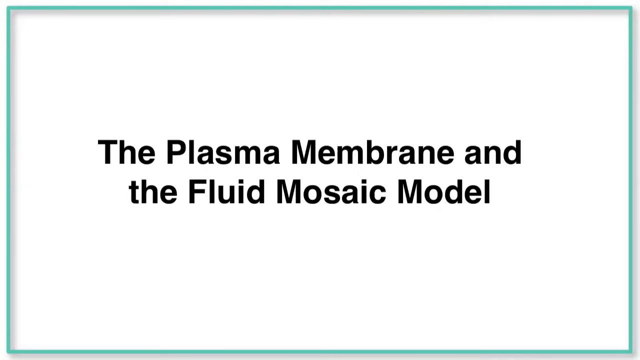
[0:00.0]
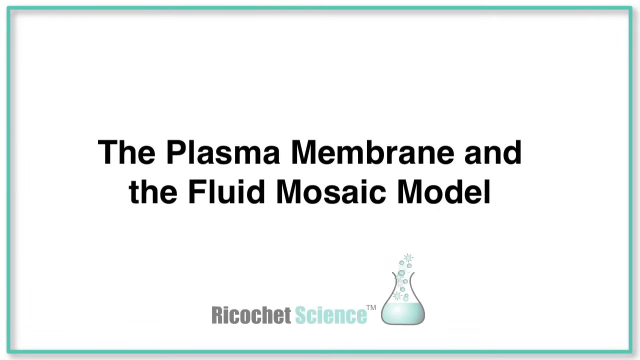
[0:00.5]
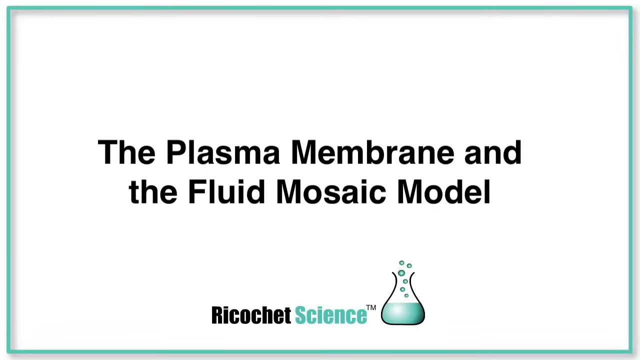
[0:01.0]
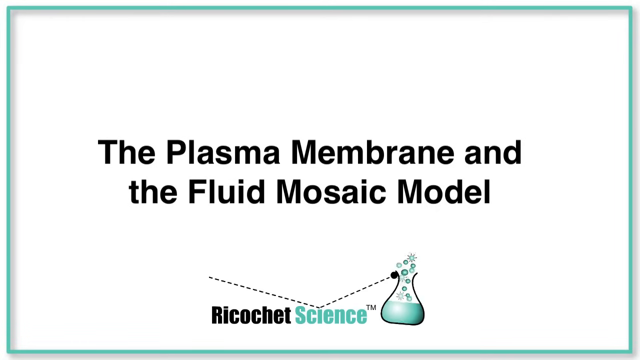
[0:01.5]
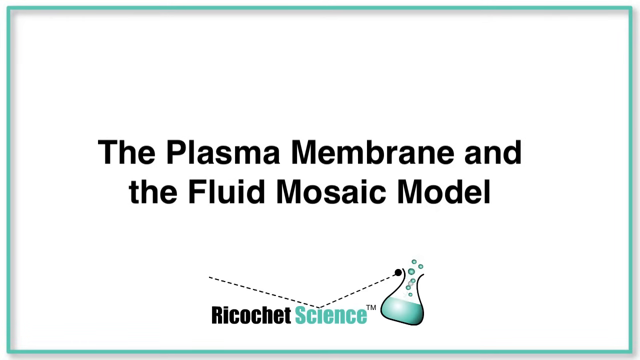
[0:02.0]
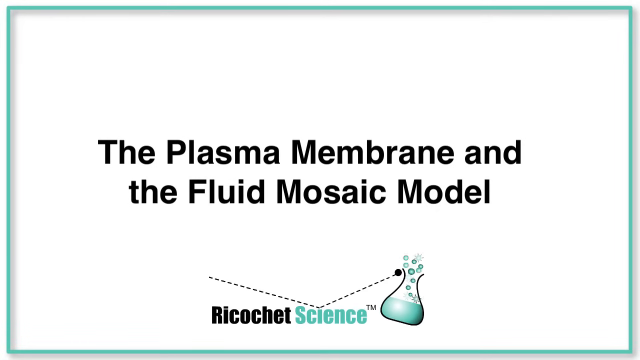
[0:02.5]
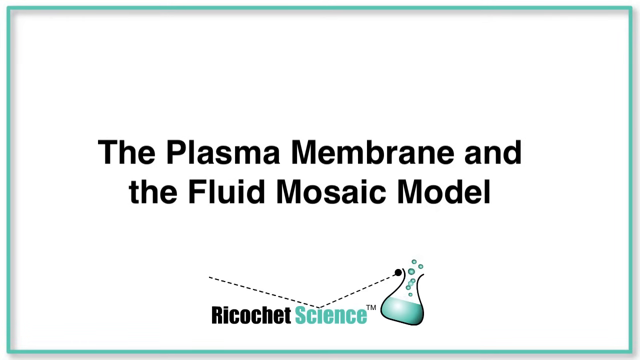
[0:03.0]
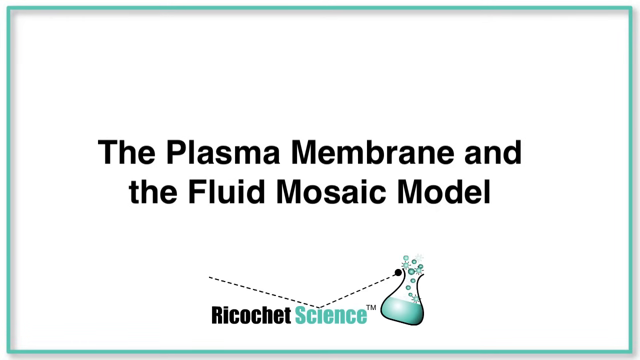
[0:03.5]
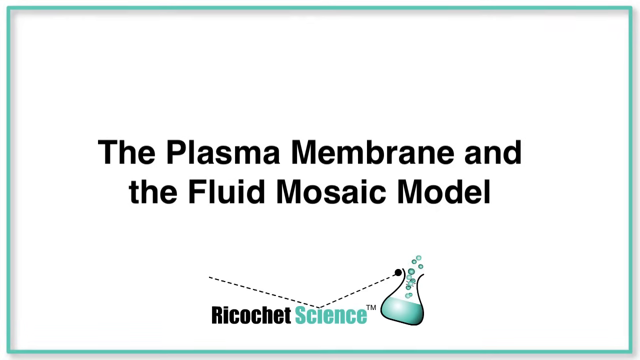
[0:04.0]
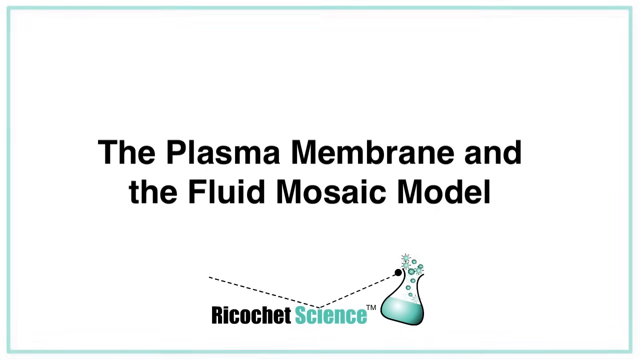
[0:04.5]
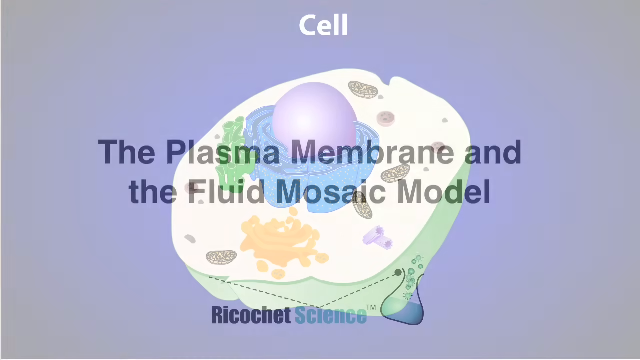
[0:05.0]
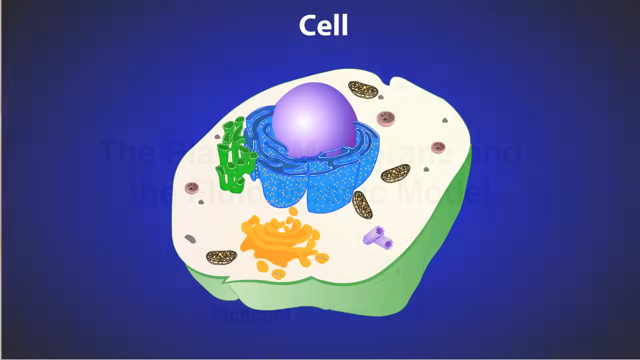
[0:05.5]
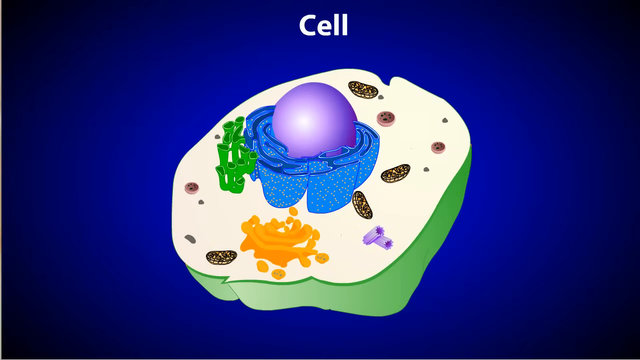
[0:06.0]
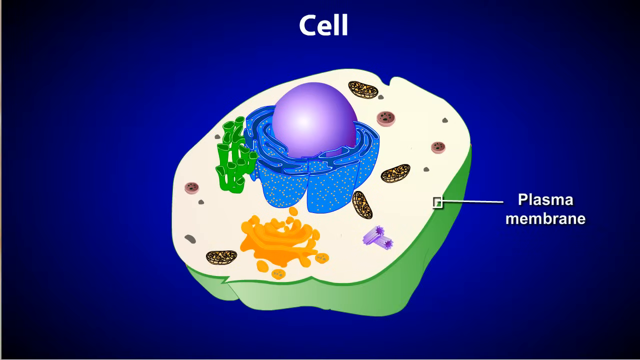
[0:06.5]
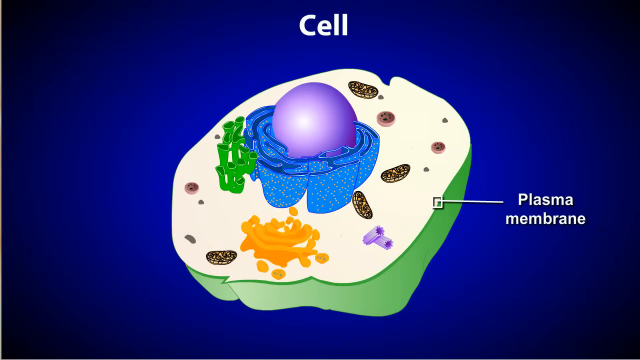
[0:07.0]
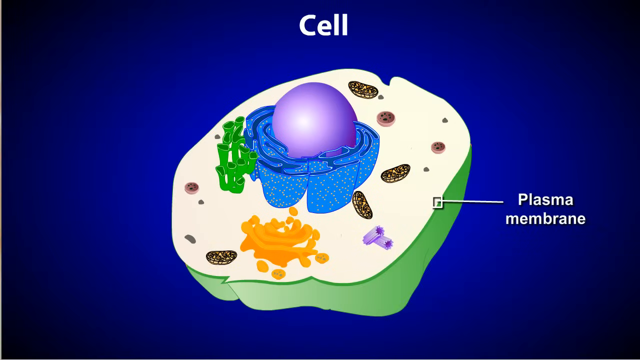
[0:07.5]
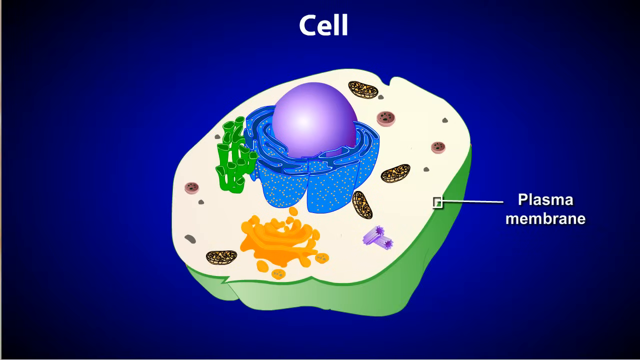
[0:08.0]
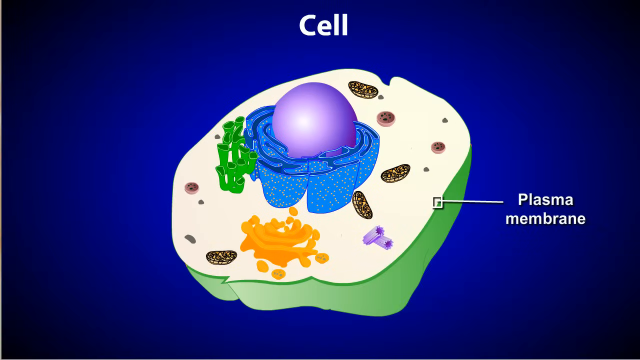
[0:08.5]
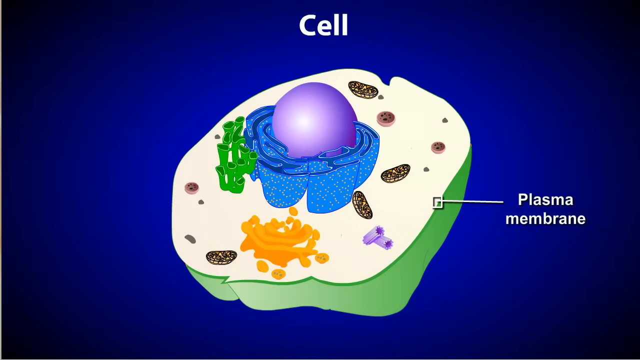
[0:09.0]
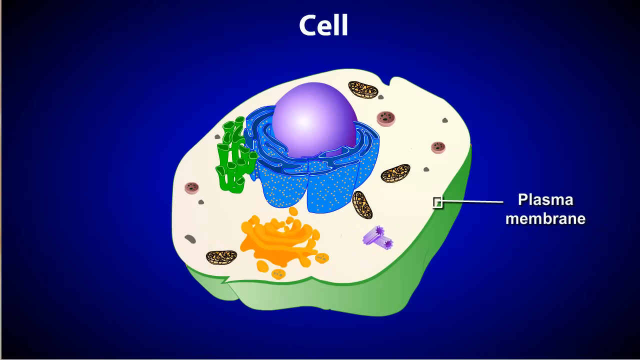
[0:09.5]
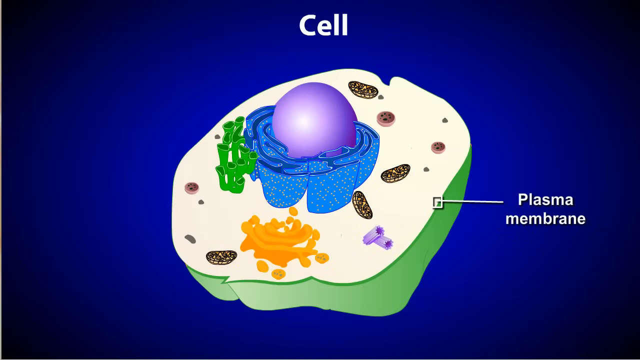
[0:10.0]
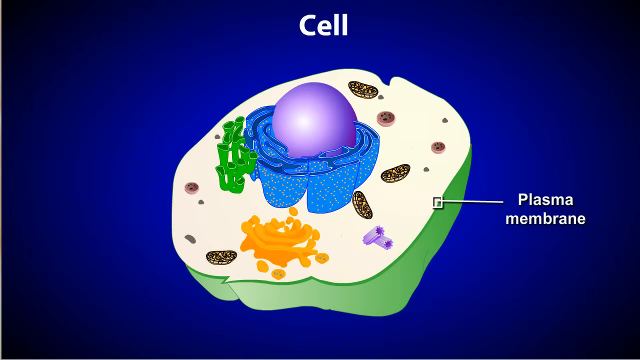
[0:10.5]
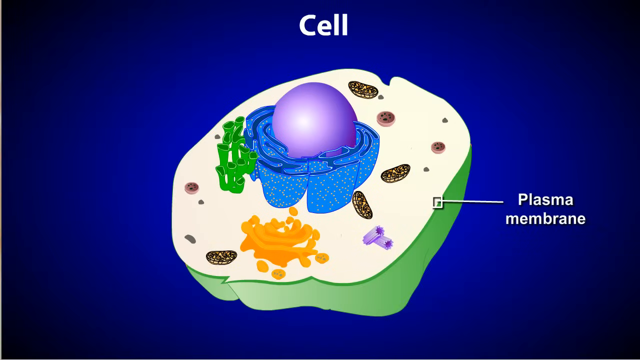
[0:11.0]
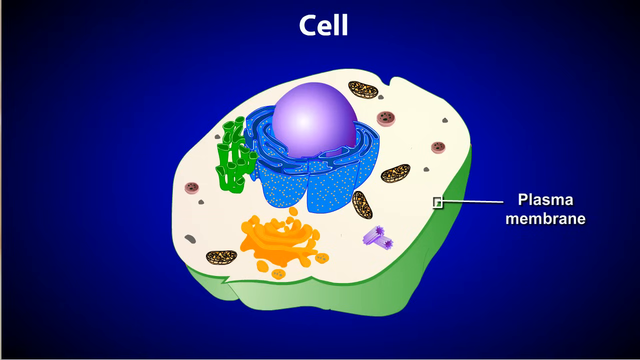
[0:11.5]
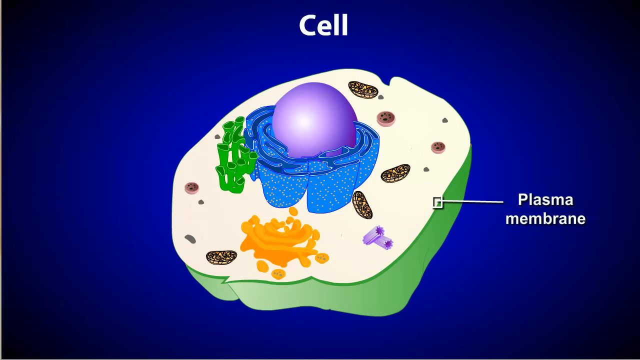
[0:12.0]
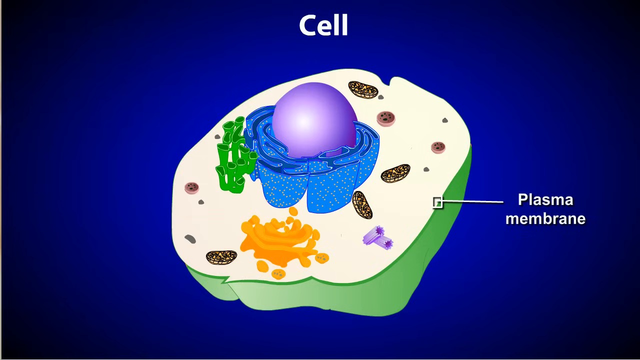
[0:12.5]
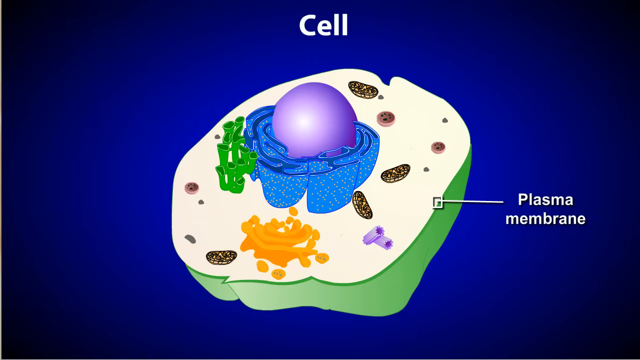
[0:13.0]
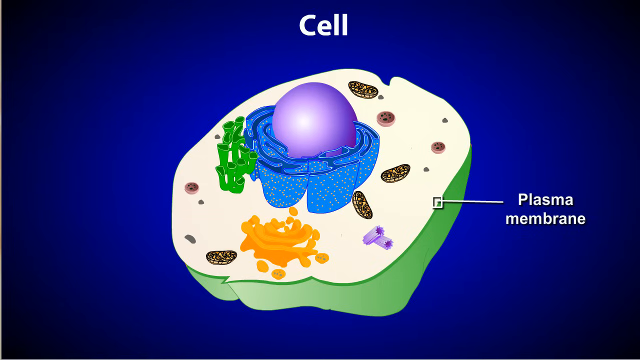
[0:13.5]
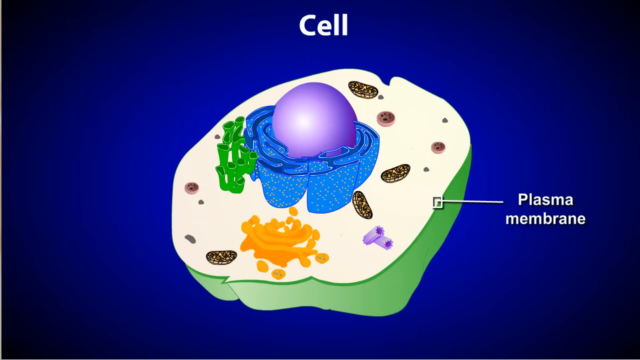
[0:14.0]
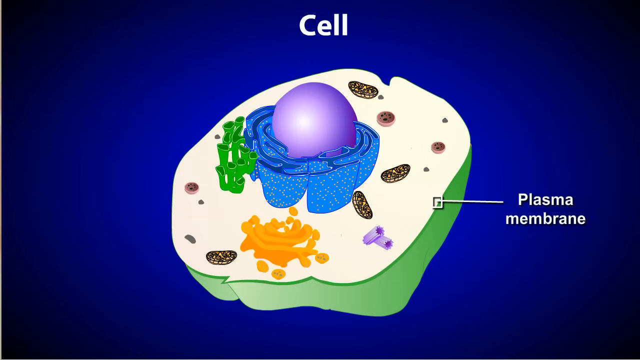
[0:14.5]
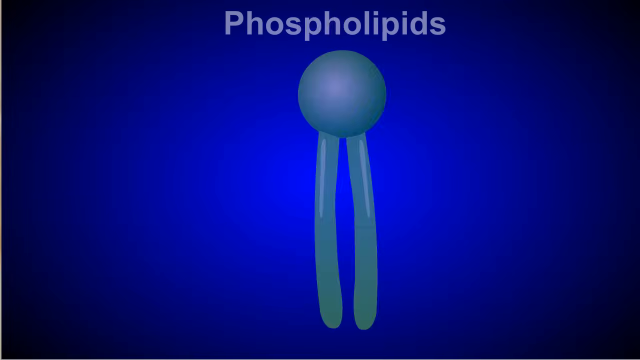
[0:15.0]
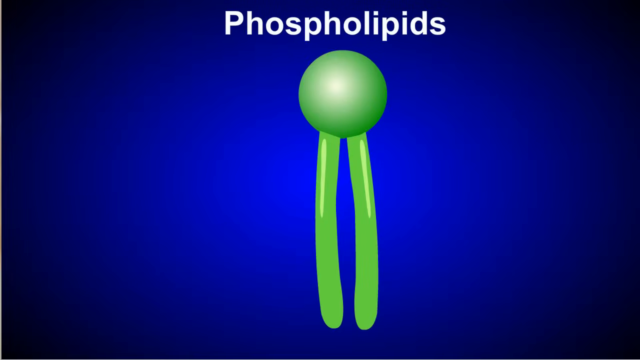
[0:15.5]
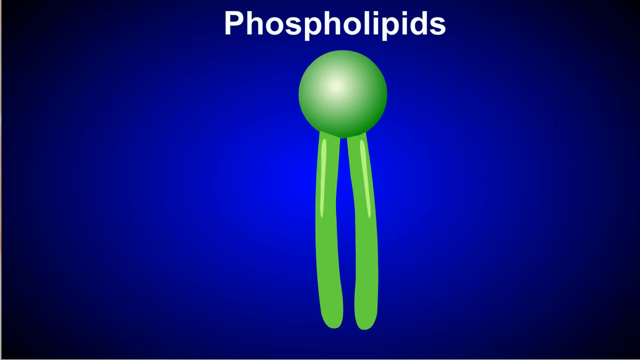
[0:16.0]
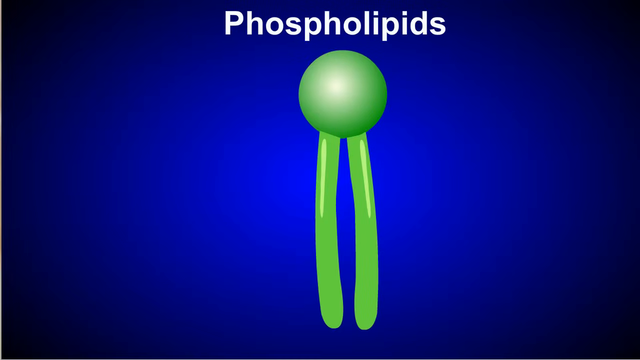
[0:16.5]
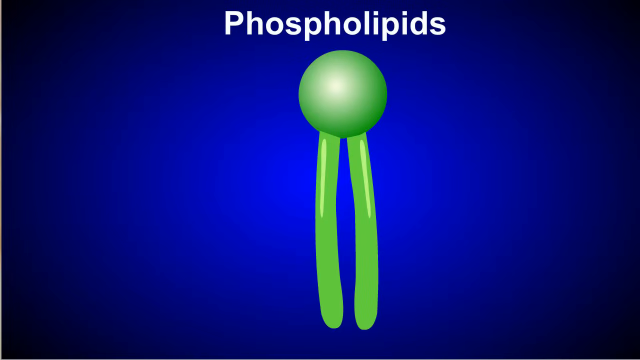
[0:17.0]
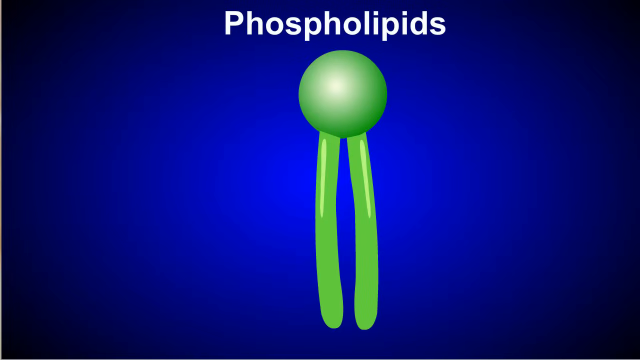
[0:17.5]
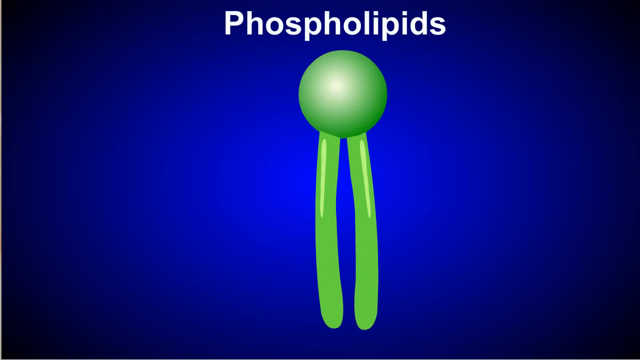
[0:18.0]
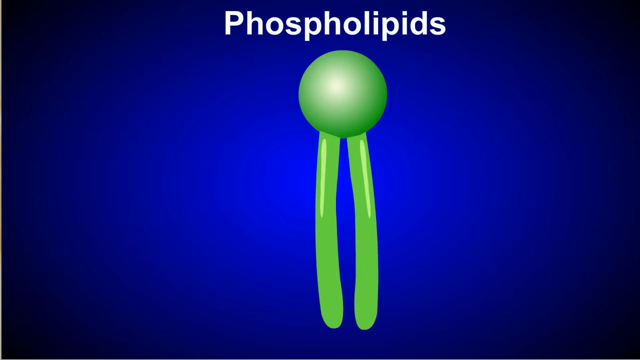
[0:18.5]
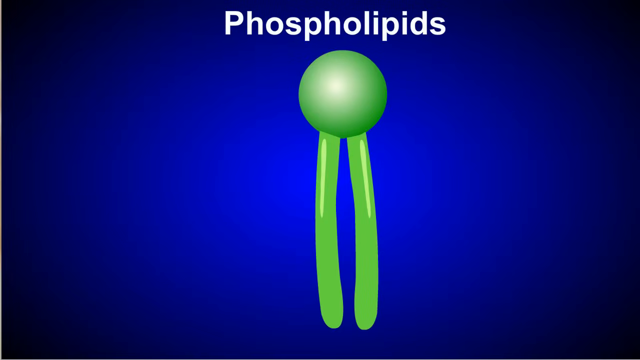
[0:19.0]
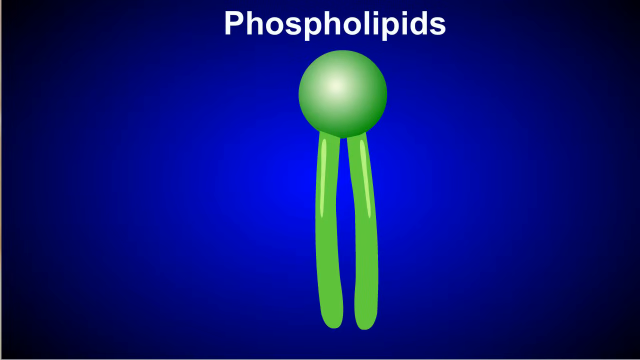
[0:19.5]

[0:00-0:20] A white background shows black lettering in the center reading "the plasma membrane in the fluid mosaic model." At the bottom, black lettering reads "ricochet" and teal lettering reads "science." To the right is a black jar with some teal liquid at the bottom and teal bubbles rising. A black dotted line bounces off the I of "science" and forms a red ball that hits the side of the bottle on its edge. The next image has a blue background with white lettering at the top reading "CELL." A rounded piece is off-white on top and lime green on the bottom, with a purple ball at its center. The outer edge is like a blue wall with white dots. There is green tubing on the left side, orange tubing at the bottom center, and brown circles dotted around. White lettering on the right reads "Plasma Membrane," with a white arrow pointing at the membrane itself. In the final image, white lettering at the top reads "phospholipids," above a green circle with two green tubes going downwards.